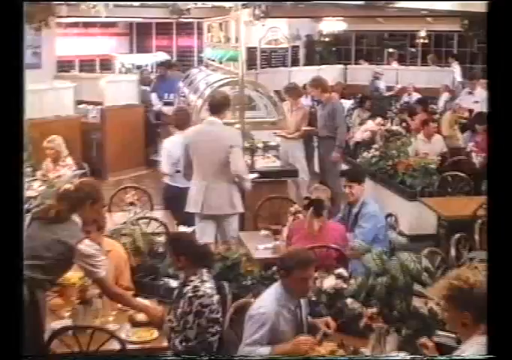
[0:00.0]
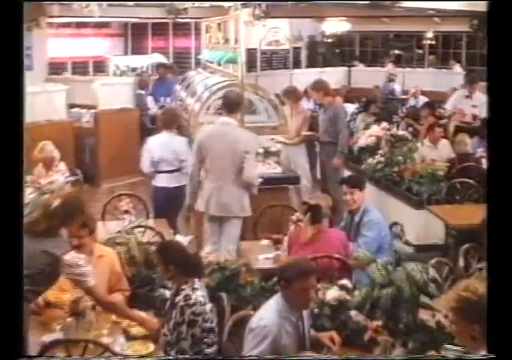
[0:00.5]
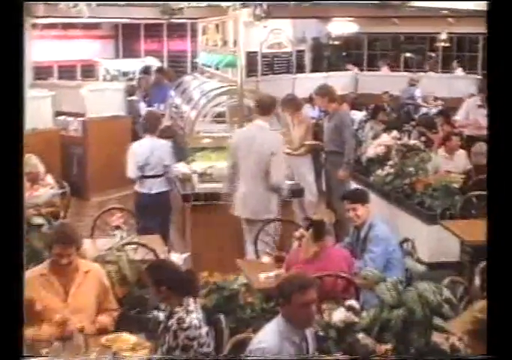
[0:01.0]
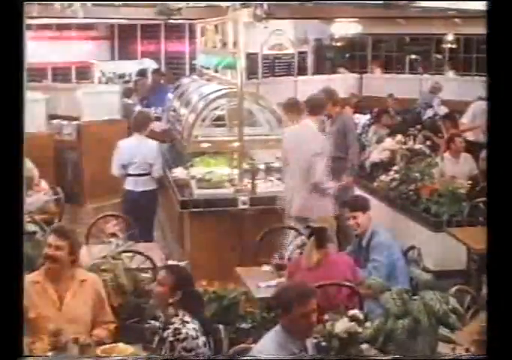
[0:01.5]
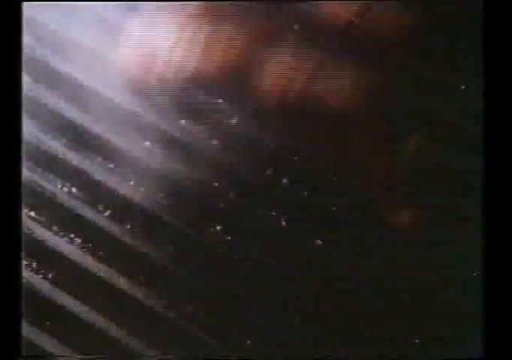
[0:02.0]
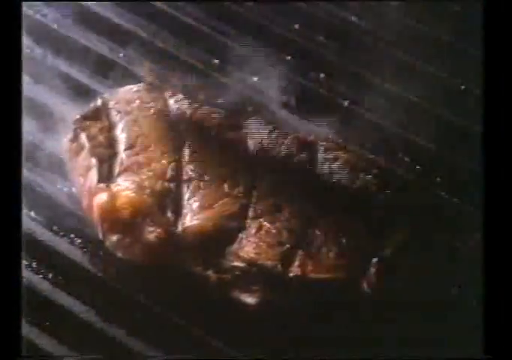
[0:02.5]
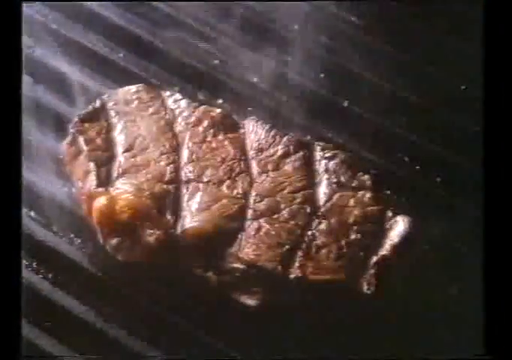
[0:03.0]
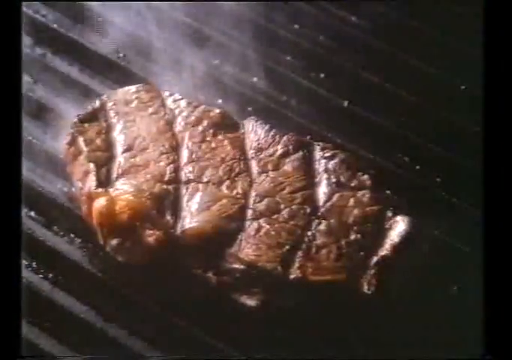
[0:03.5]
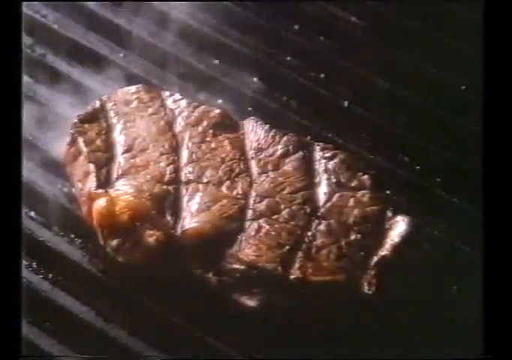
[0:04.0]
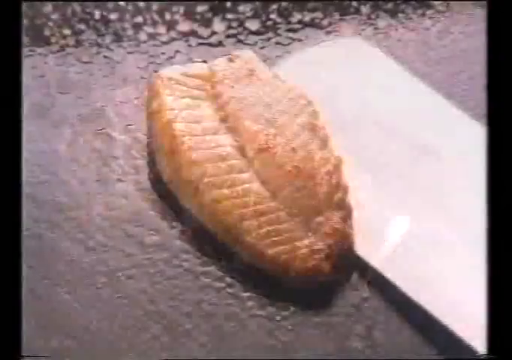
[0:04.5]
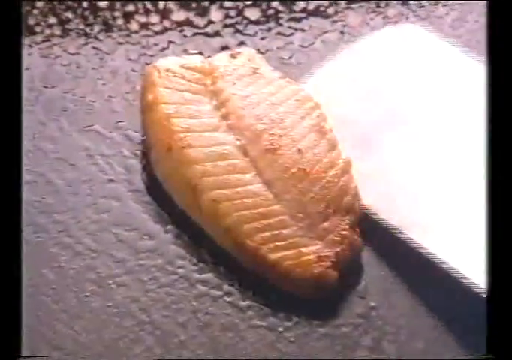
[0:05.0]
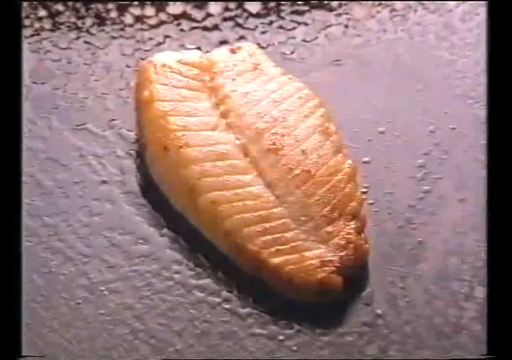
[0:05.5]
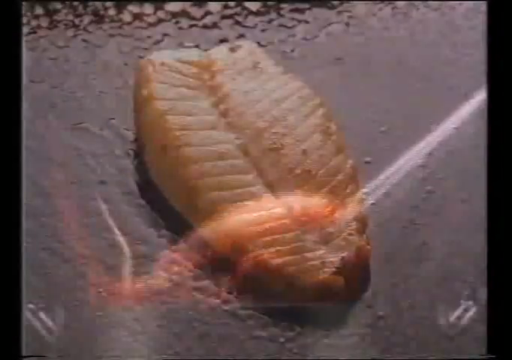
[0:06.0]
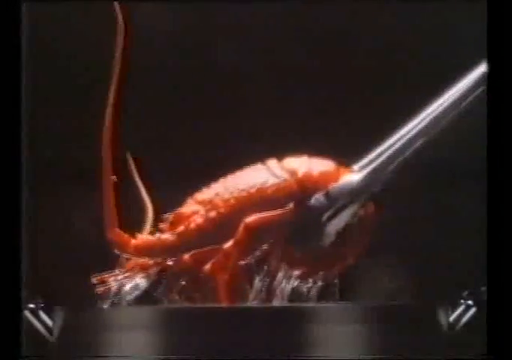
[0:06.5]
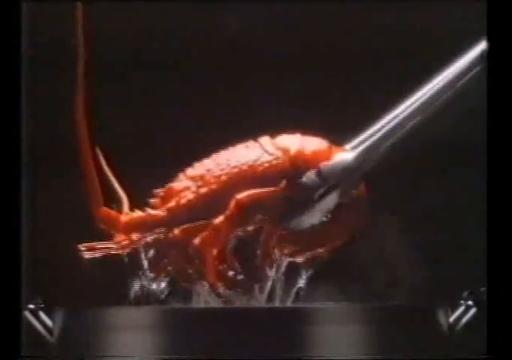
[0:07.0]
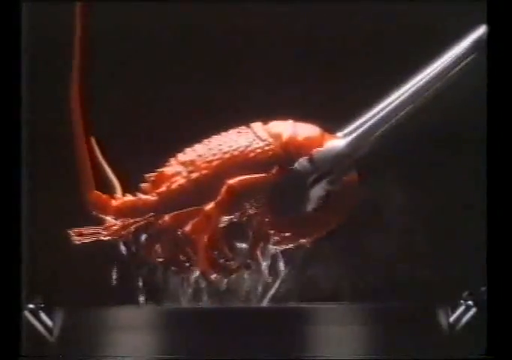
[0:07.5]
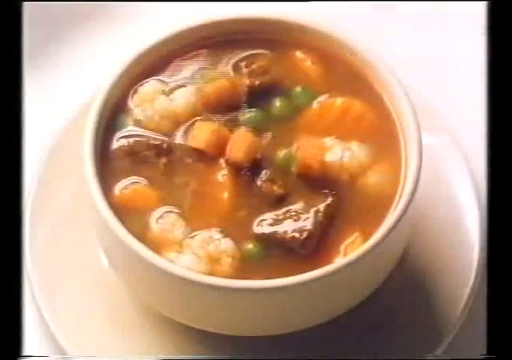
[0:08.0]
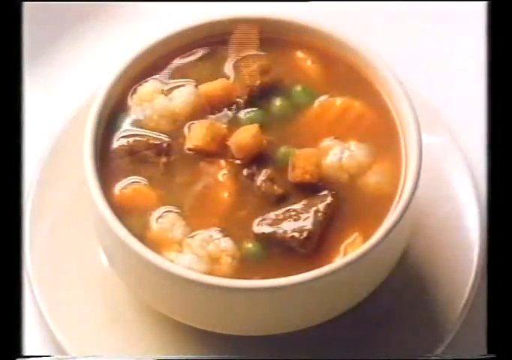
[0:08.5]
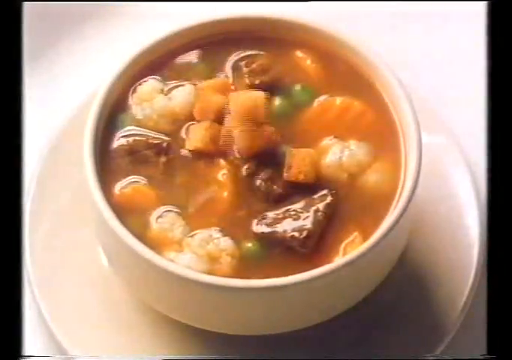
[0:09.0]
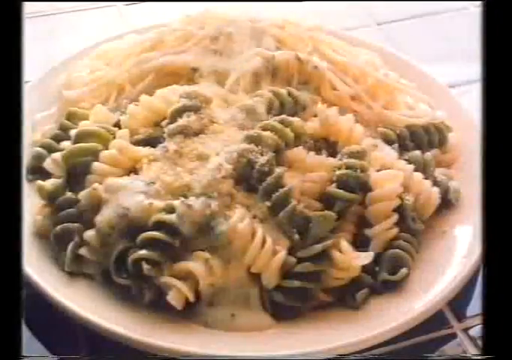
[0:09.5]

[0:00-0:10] The video opens on many people, men and women, in what seems to be a restaurant setting. Some are seated, some are standing and some are walking; some are talking and some are laughing. Next, a big piece of meat that looks like a steak is flipped on a grill, one side browner than the other. Then raw meat that looks like a fish fillet is laid down. Silver tongs pick up a prawn from some hot liquid. A white bowl contains some food with some soup. Finally, there is some pasta on a white plate garnished with some cheese on top.